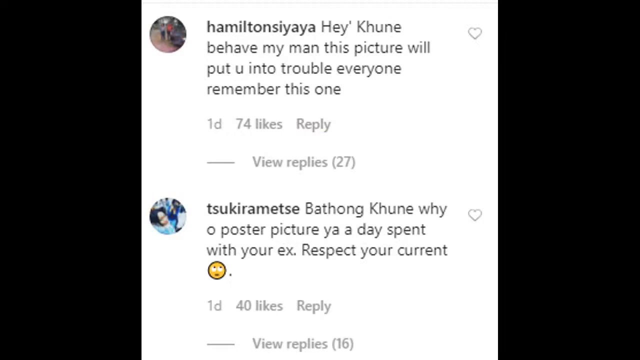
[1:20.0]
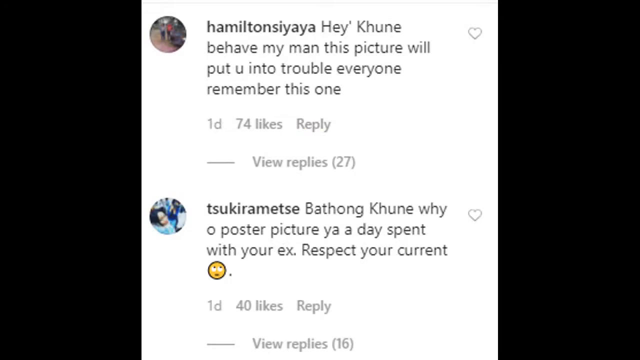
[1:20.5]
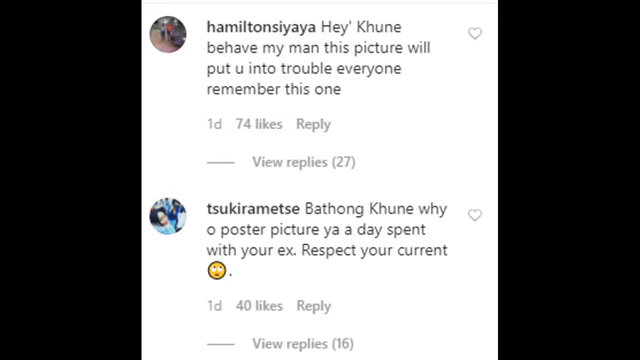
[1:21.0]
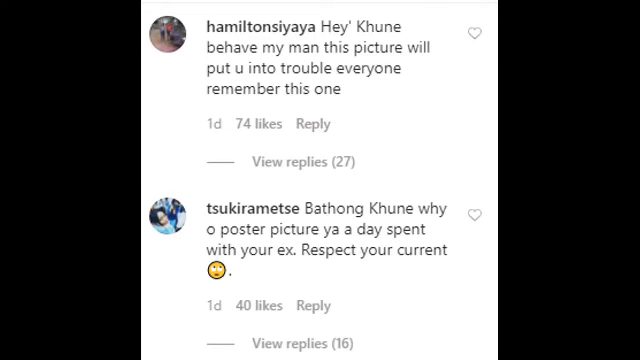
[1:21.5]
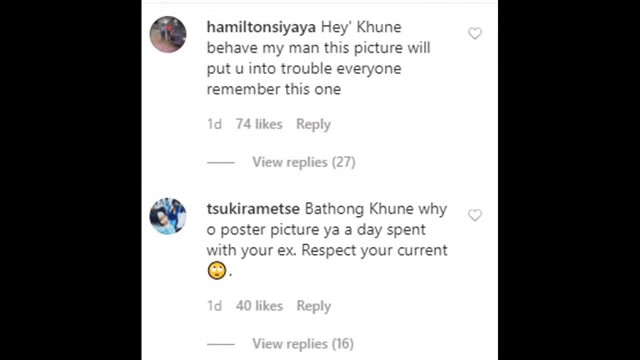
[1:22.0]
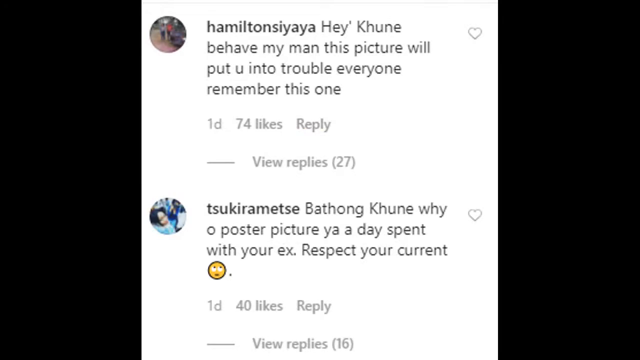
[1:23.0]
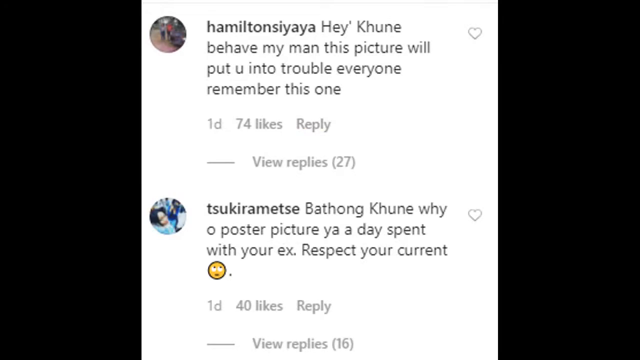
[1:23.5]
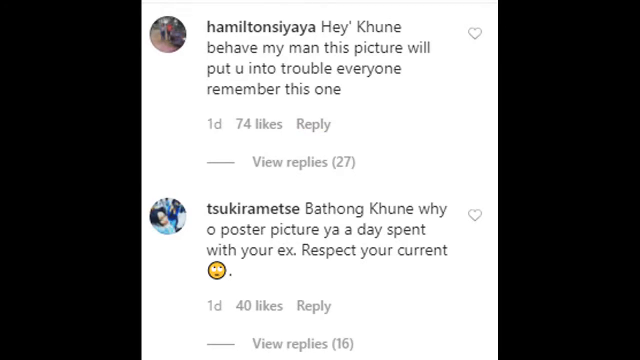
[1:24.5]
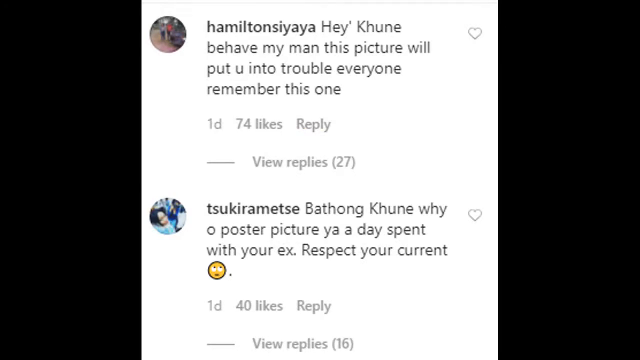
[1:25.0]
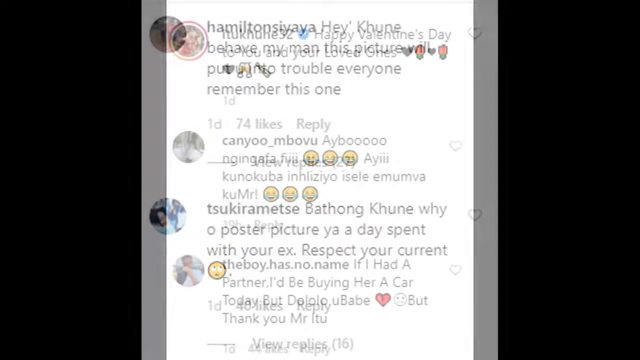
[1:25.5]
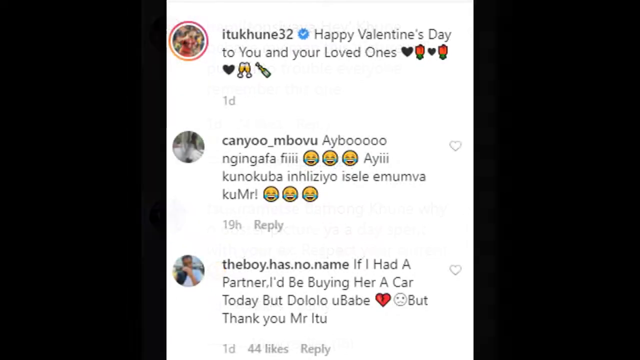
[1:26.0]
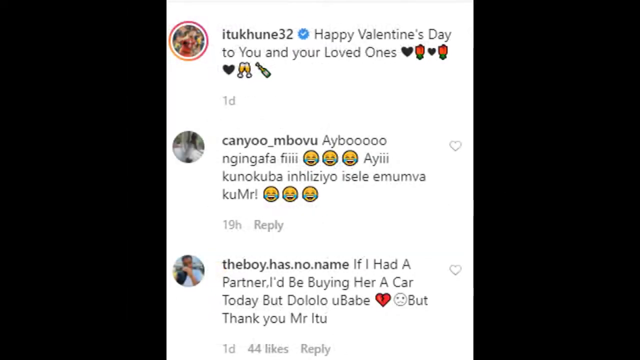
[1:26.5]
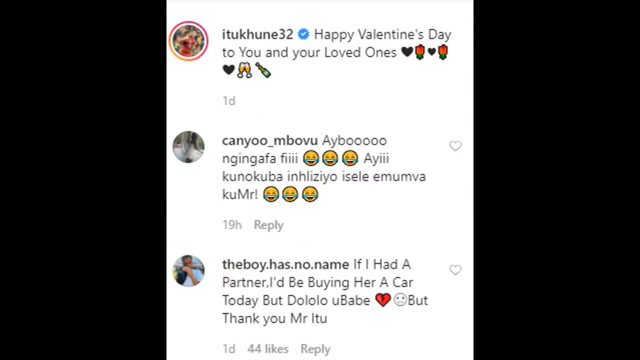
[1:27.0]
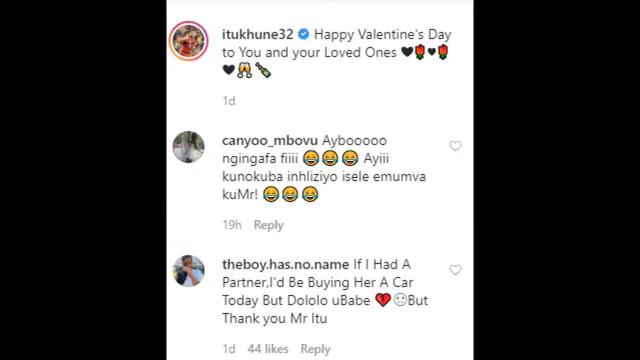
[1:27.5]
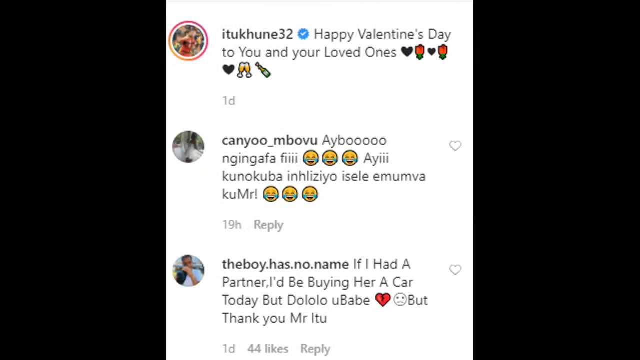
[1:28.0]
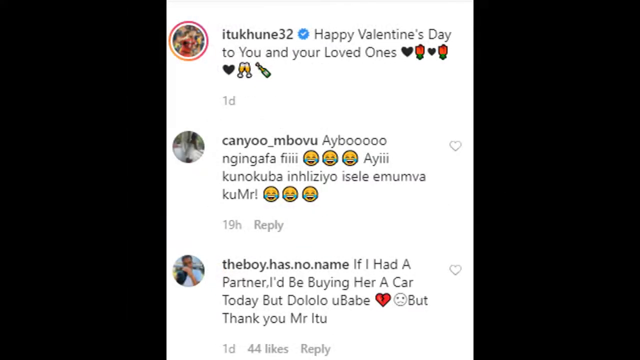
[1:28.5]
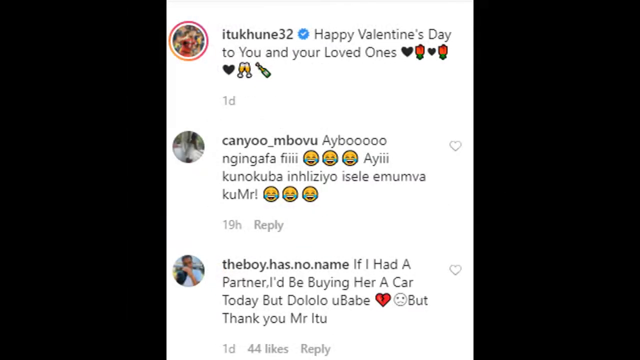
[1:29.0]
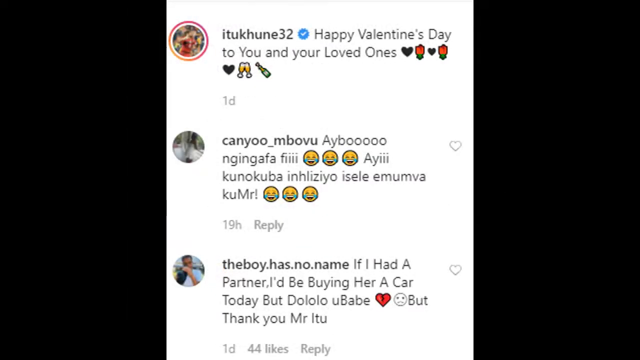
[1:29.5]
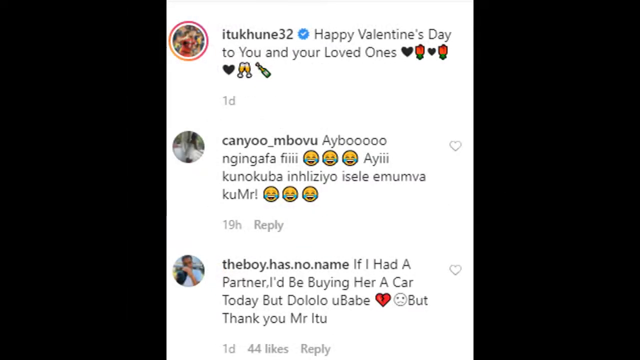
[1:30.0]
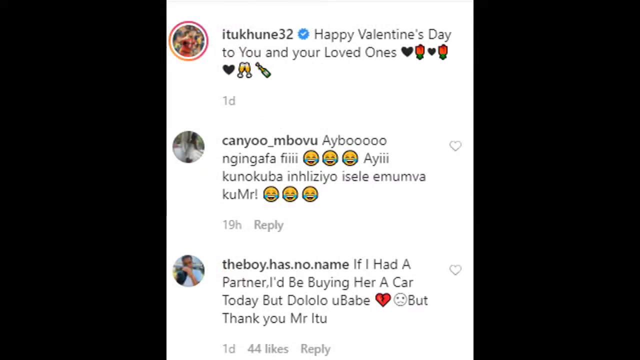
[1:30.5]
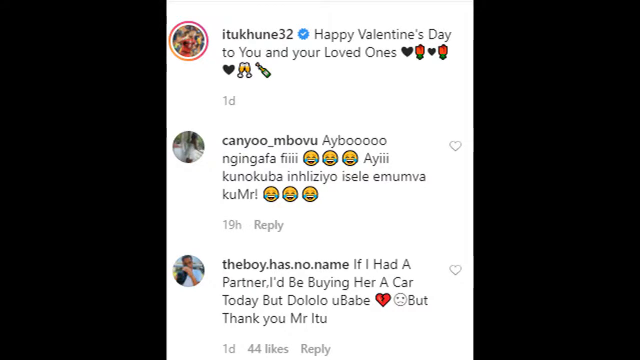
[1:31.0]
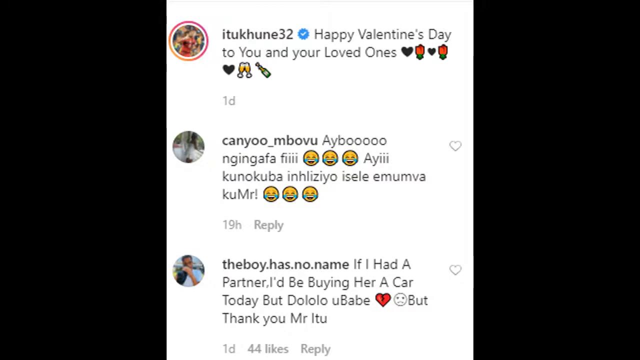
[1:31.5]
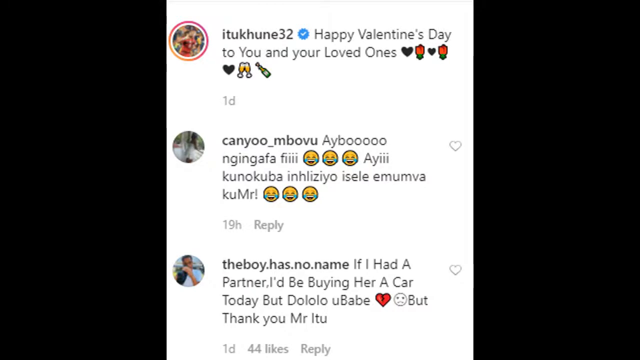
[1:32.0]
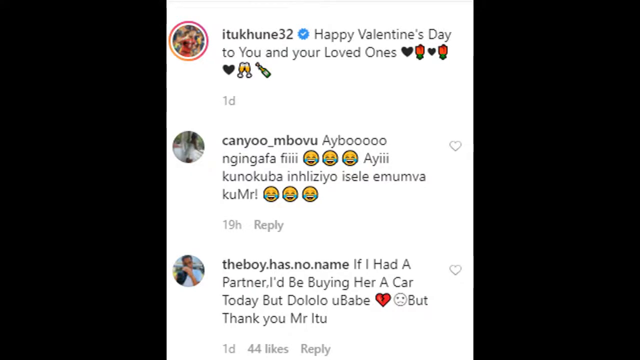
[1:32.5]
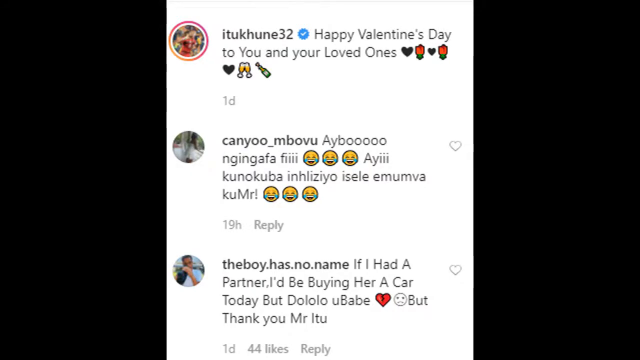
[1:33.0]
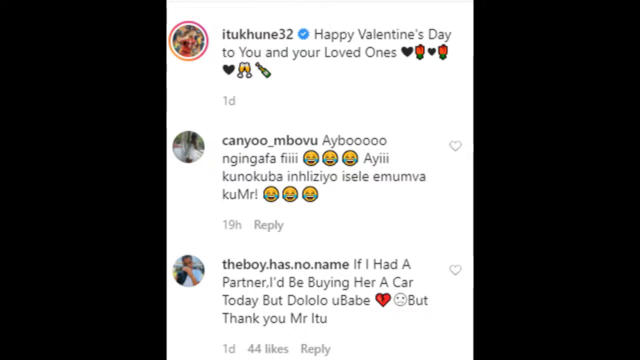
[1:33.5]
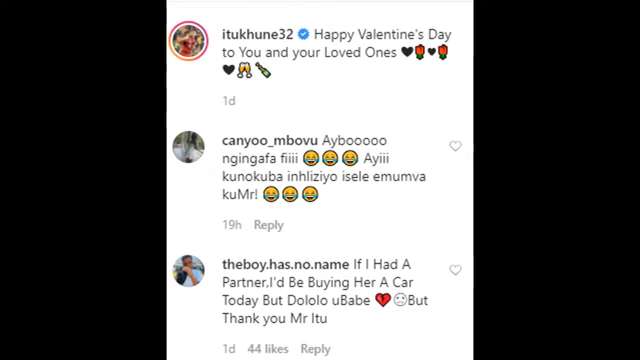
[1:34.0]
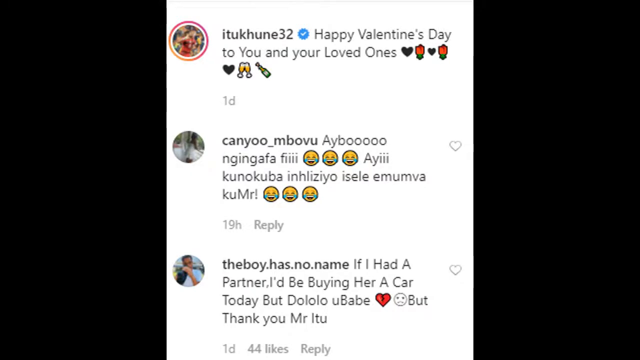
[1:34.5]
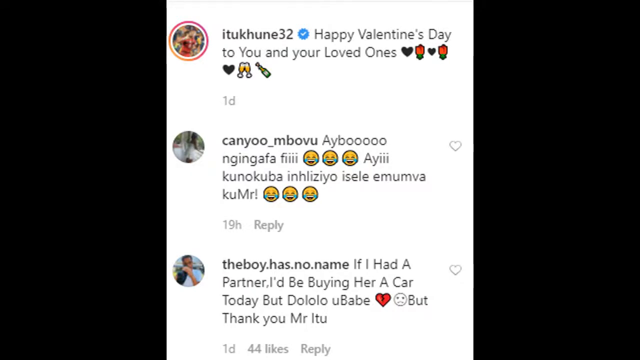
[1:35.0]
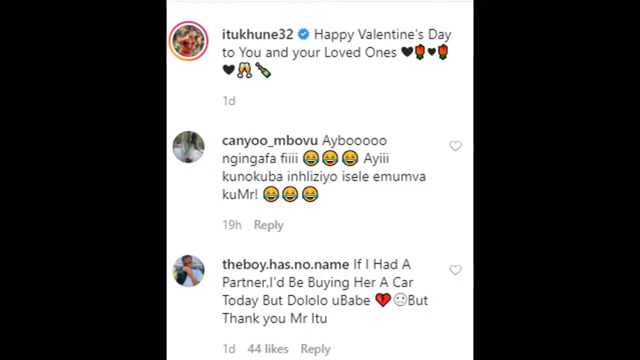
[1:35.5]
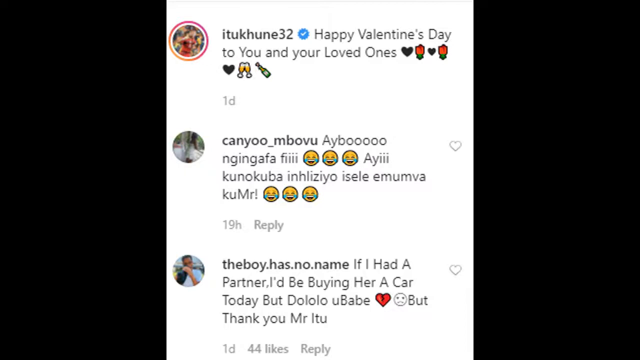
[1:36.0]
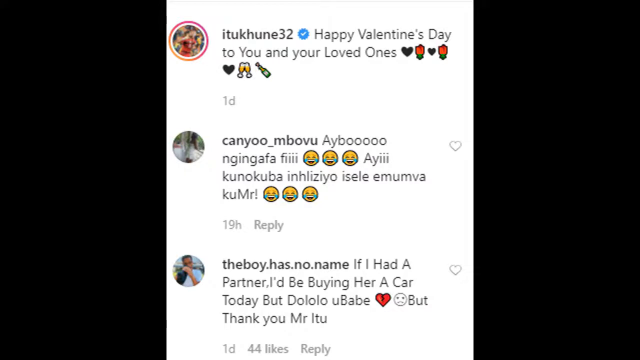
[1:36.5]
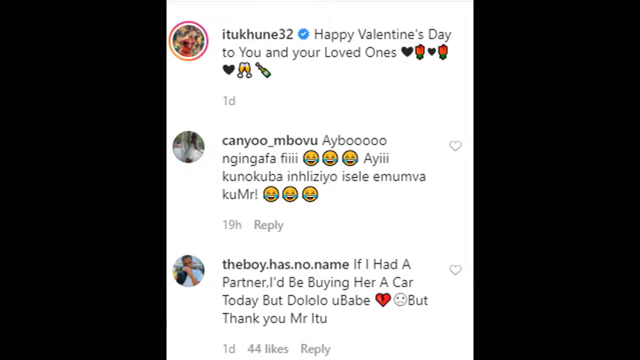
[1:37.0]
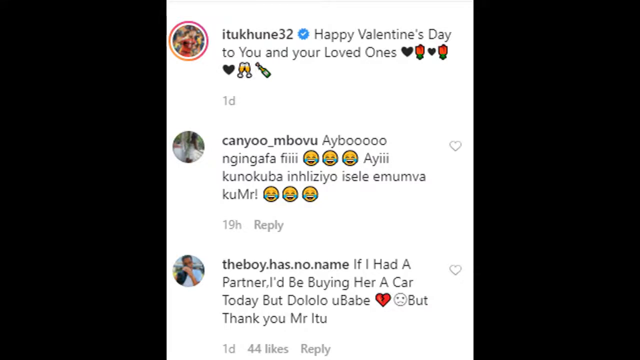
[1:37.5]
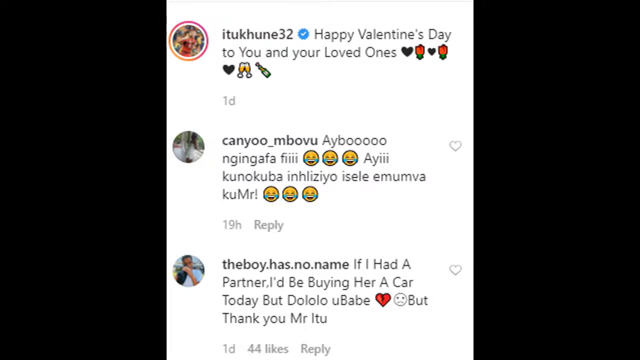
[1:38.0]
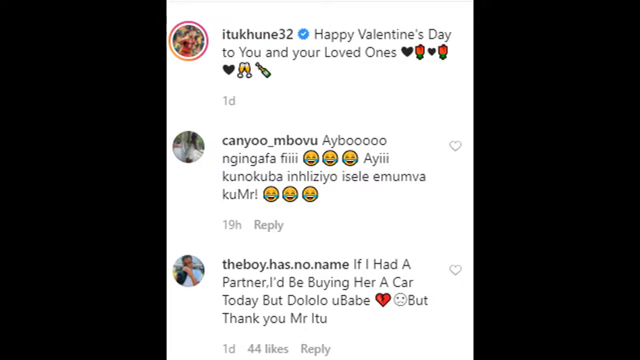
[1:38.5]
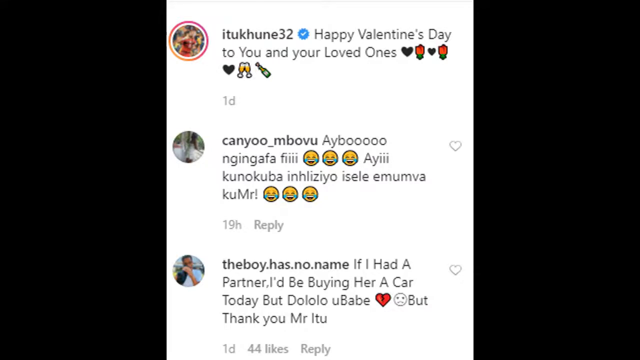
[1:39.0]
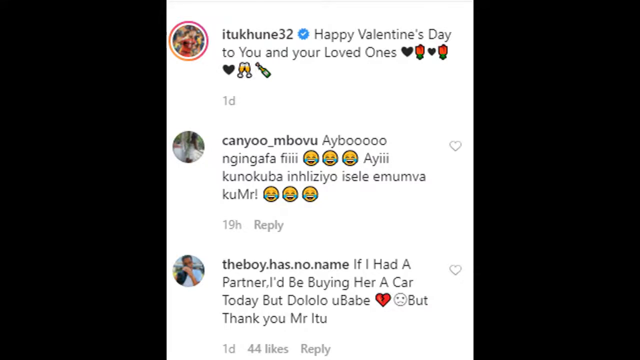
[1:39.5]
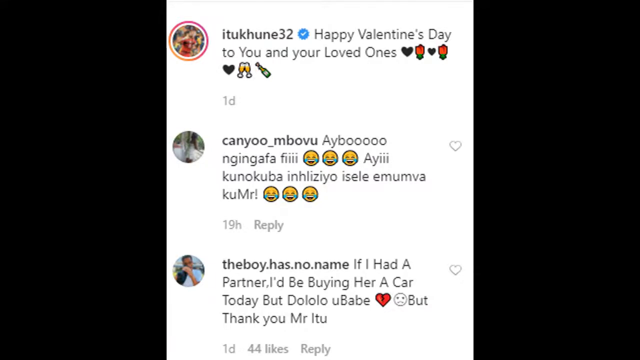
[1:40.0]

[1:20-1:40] More Facebook comments appear on screen. One reads "hey Khune, behave my man. This picture will put you into trouble. Everyone remember this one." A comment from Tsukirameze ends "respect your current wife", and it was commented about a day ago. Someone named Etu Kune writes "Happy Valentine's Day to you and your loved ones." Another comment says "if I had a partner, I would be buying her a car today. But I don't have a partner." The comments are screenshots of the Facebook post, so they look like a Facebook timeline. After the comments, the video ends on a black background.